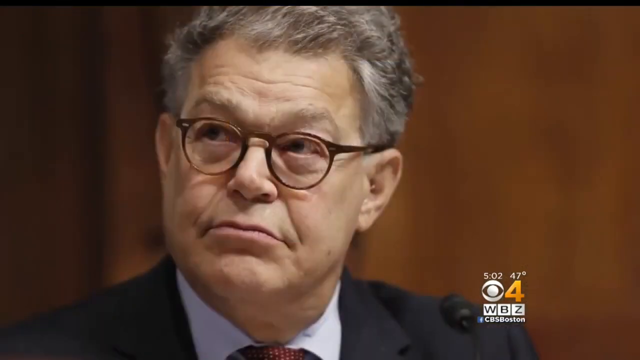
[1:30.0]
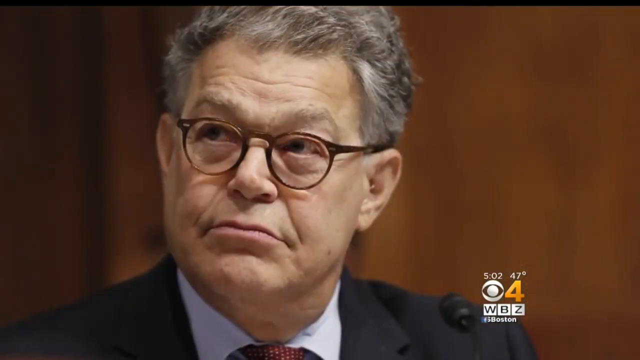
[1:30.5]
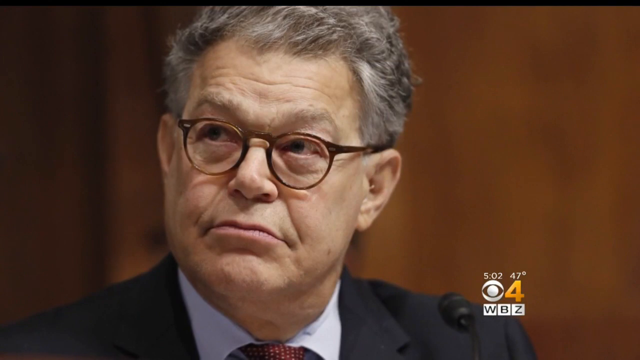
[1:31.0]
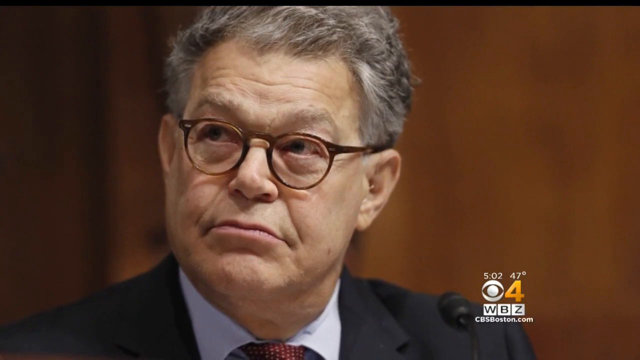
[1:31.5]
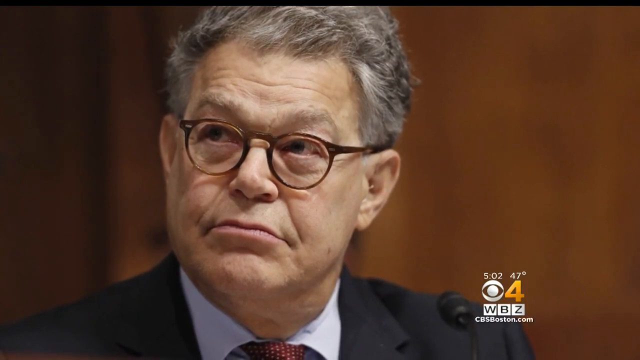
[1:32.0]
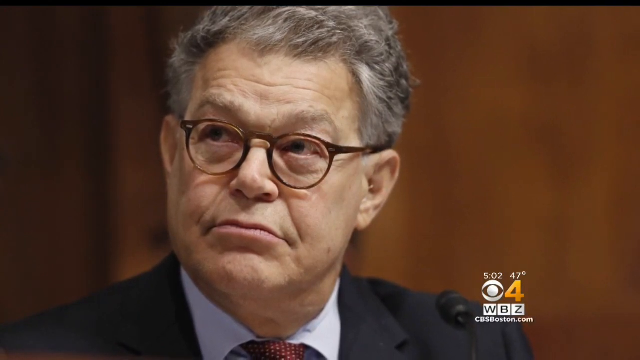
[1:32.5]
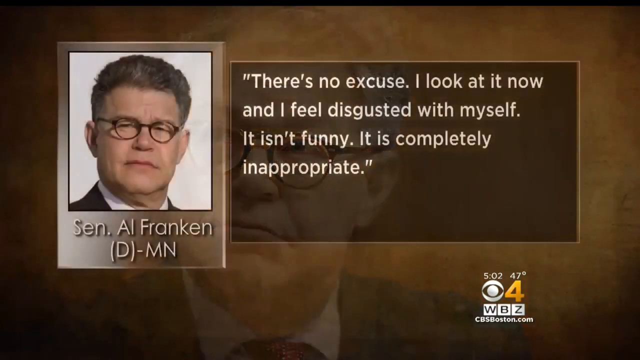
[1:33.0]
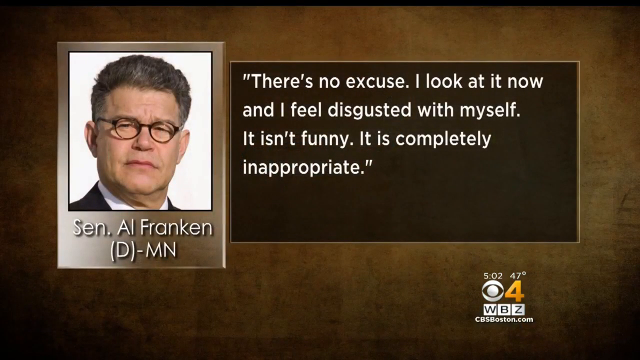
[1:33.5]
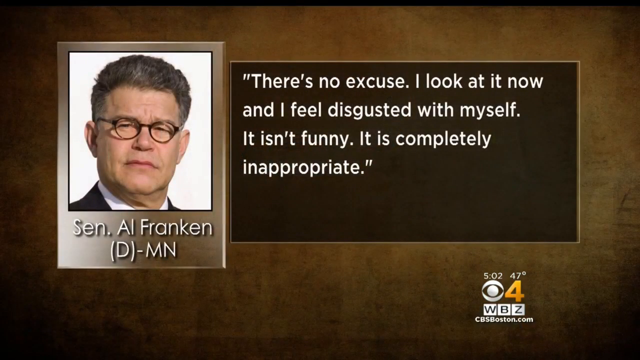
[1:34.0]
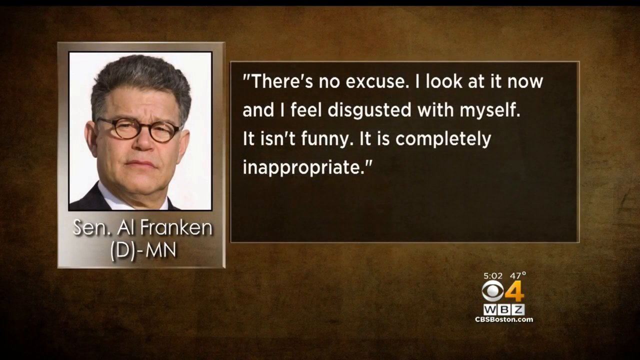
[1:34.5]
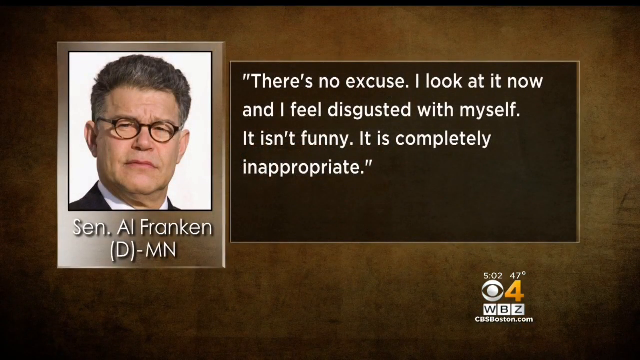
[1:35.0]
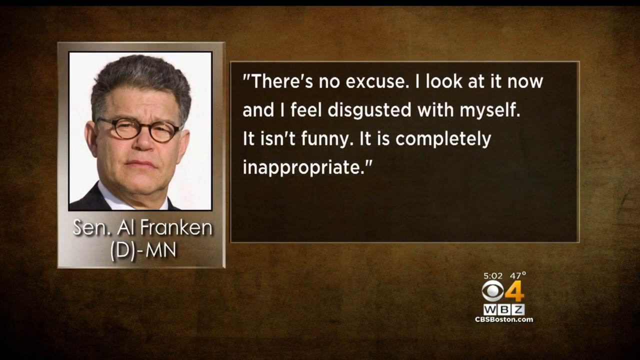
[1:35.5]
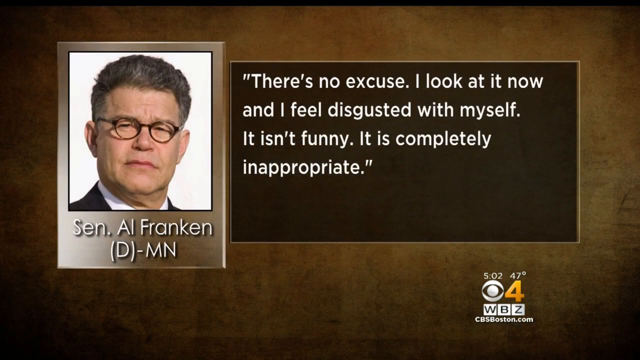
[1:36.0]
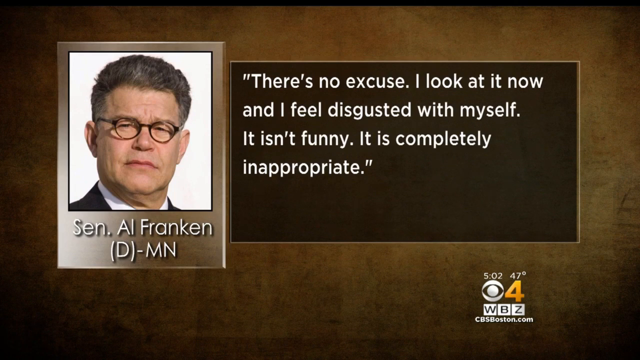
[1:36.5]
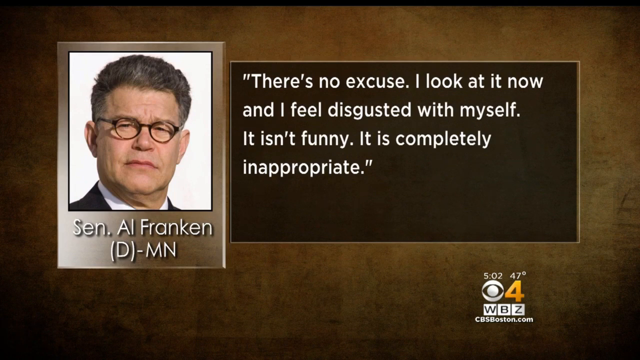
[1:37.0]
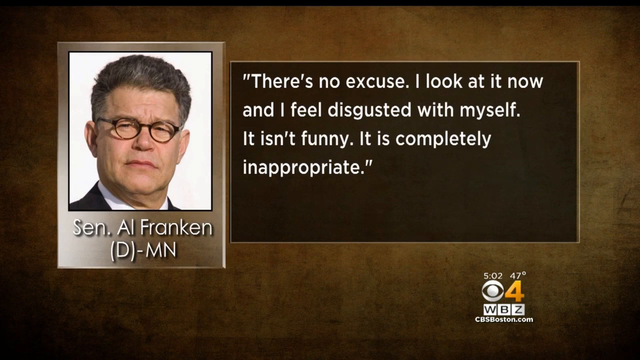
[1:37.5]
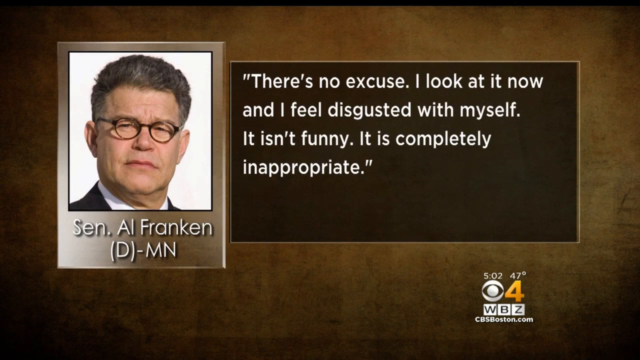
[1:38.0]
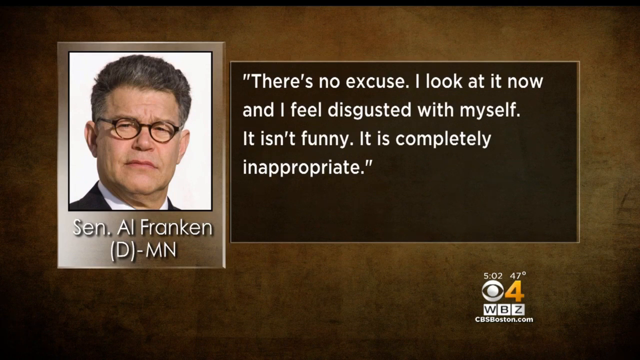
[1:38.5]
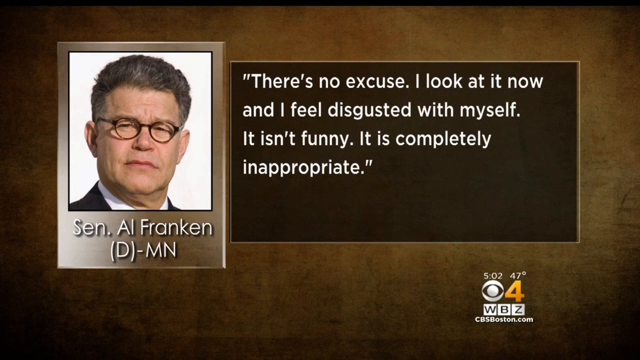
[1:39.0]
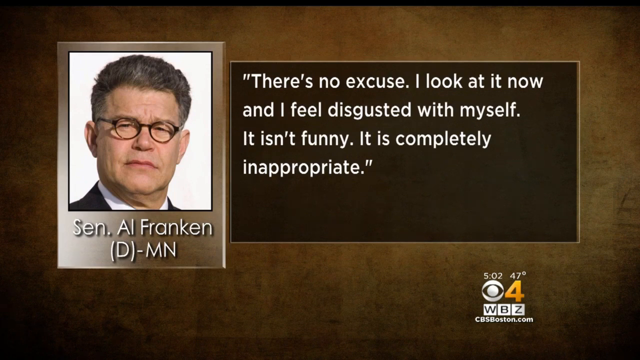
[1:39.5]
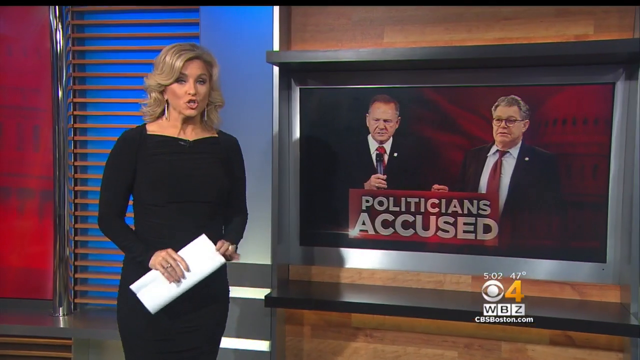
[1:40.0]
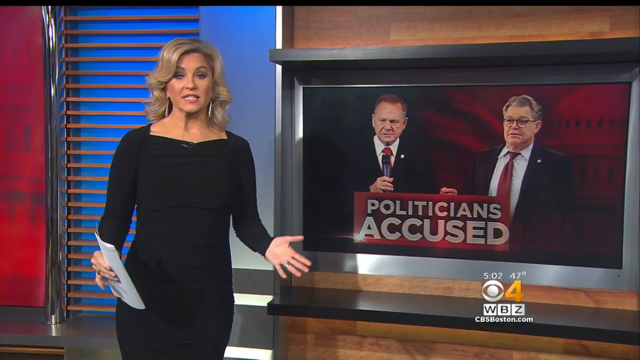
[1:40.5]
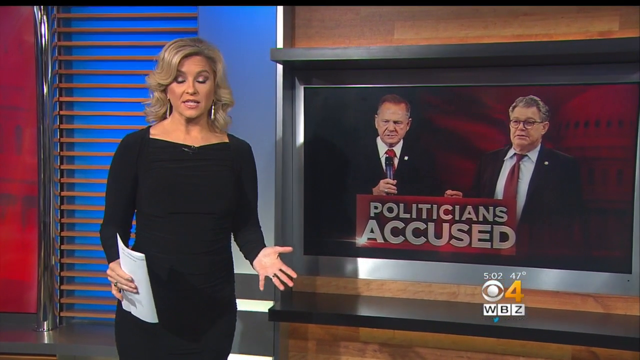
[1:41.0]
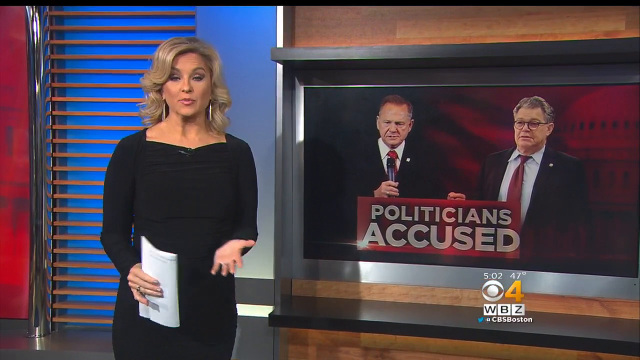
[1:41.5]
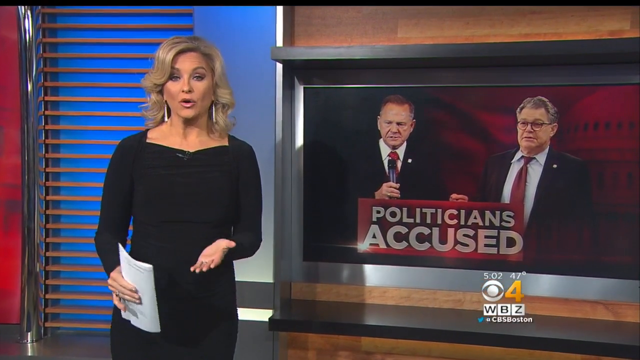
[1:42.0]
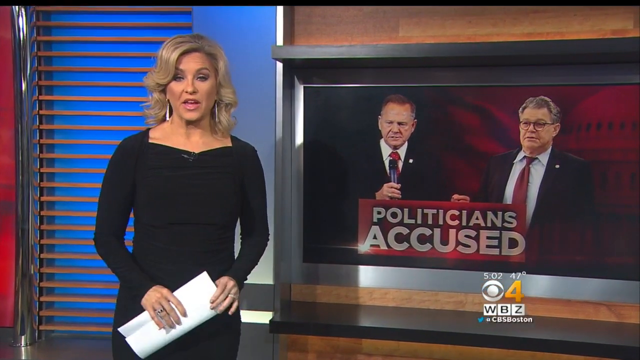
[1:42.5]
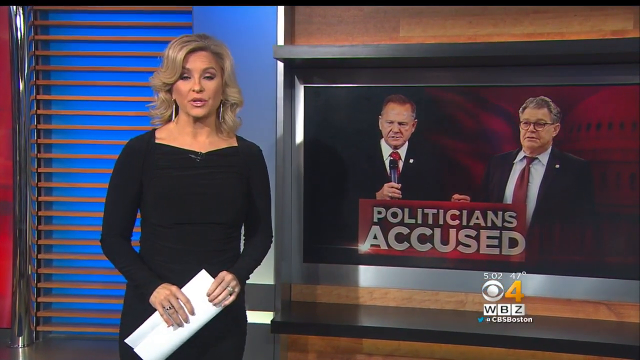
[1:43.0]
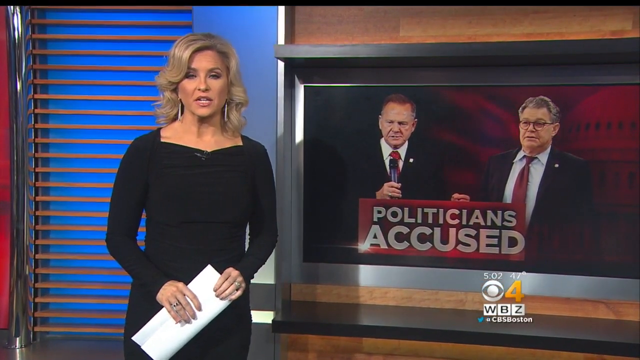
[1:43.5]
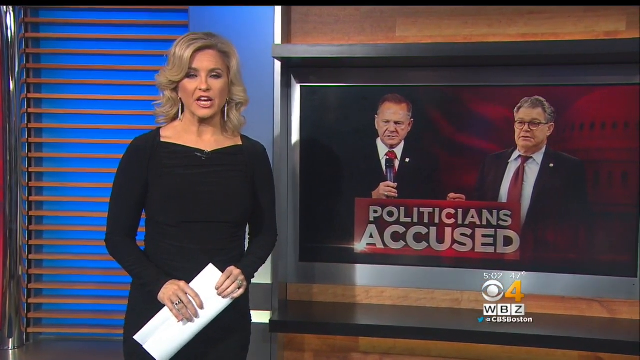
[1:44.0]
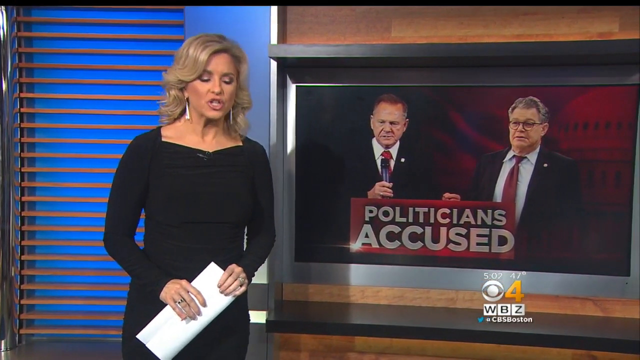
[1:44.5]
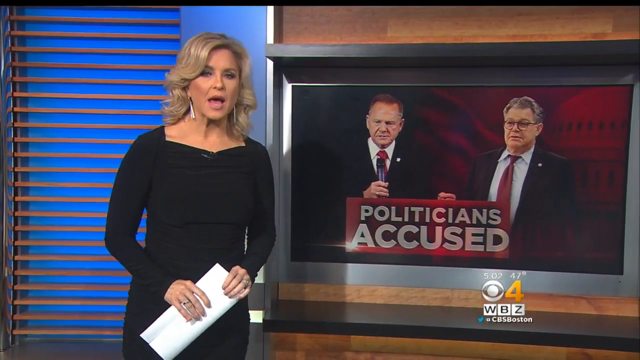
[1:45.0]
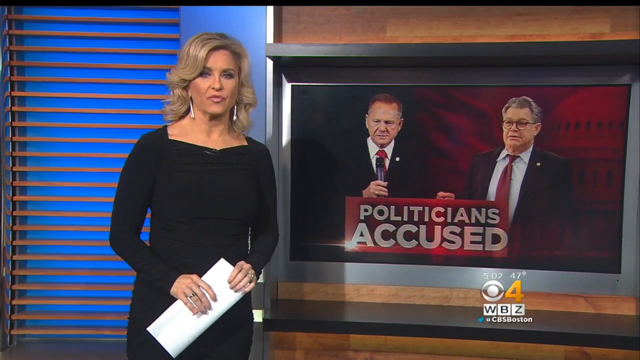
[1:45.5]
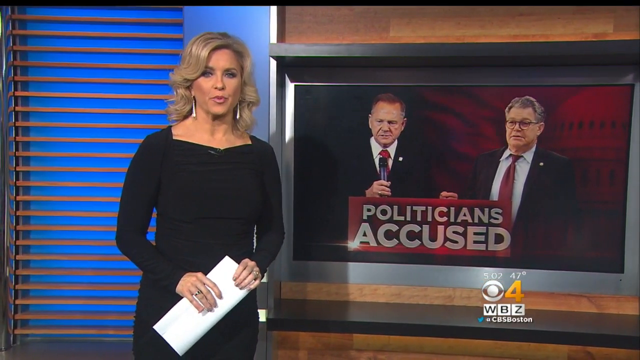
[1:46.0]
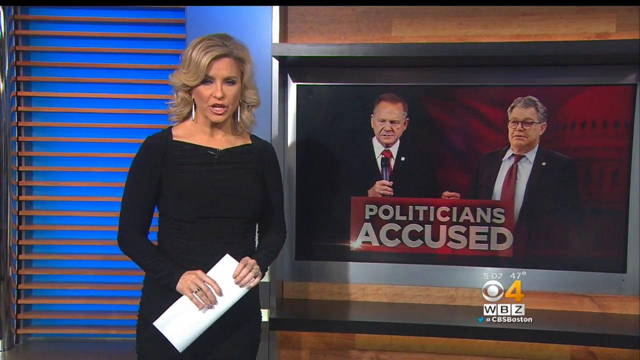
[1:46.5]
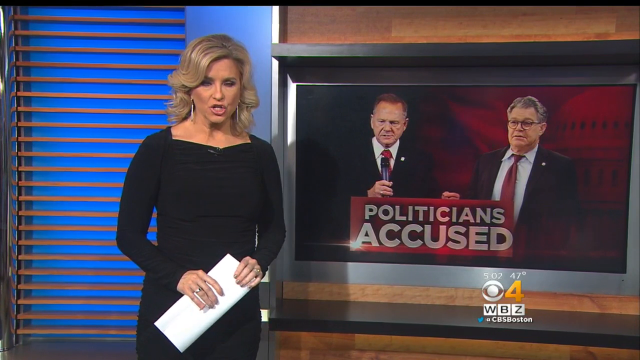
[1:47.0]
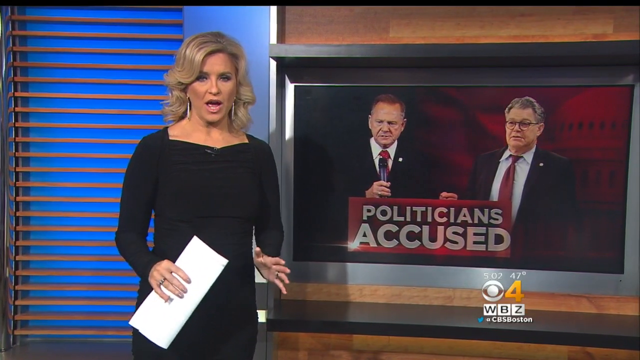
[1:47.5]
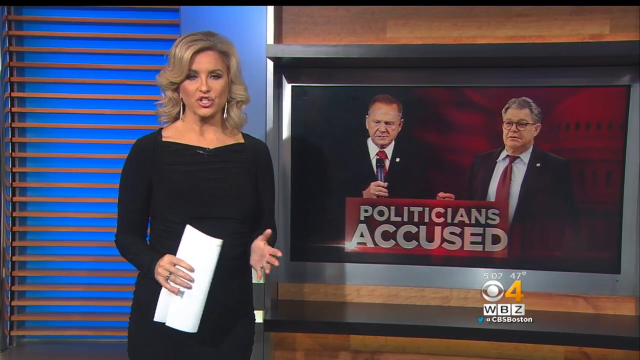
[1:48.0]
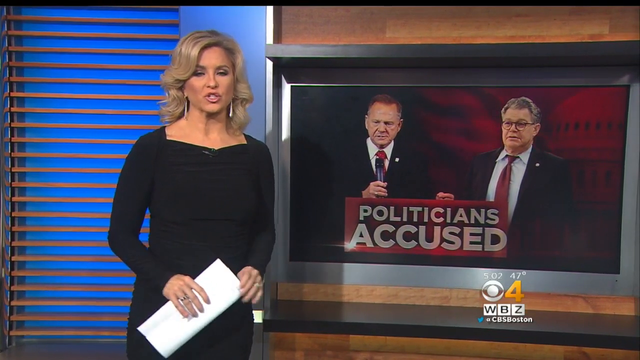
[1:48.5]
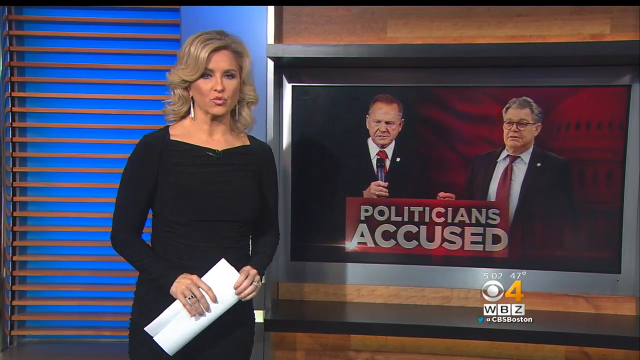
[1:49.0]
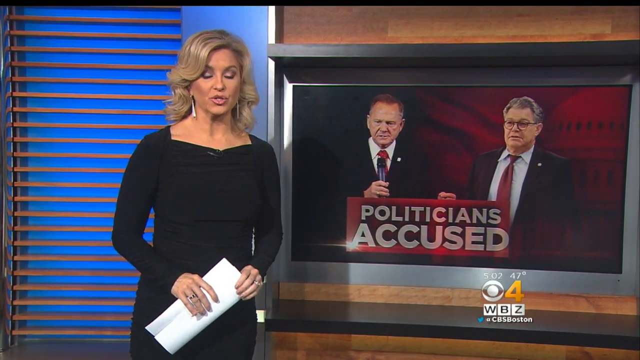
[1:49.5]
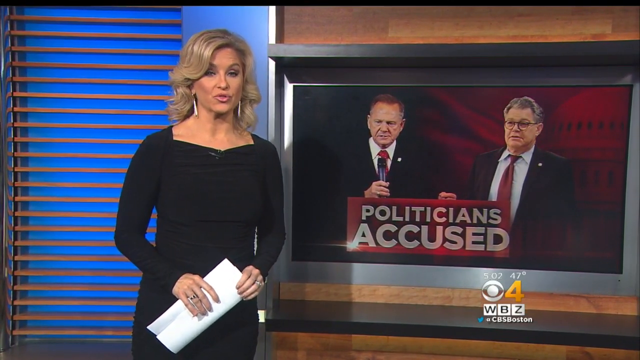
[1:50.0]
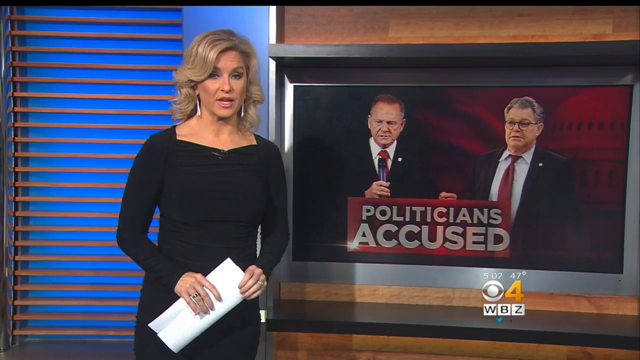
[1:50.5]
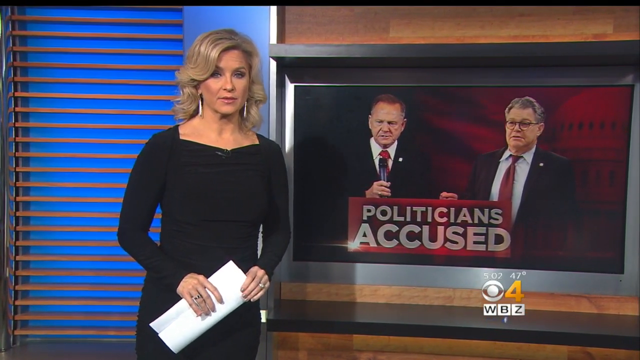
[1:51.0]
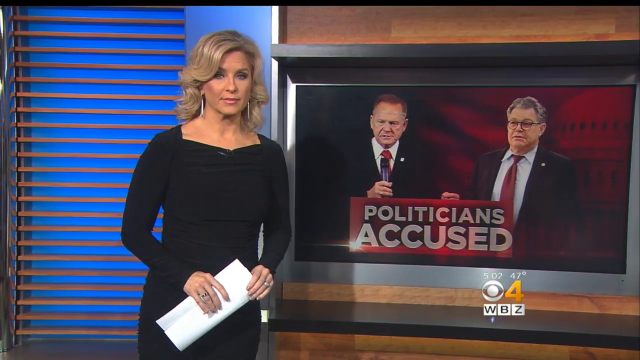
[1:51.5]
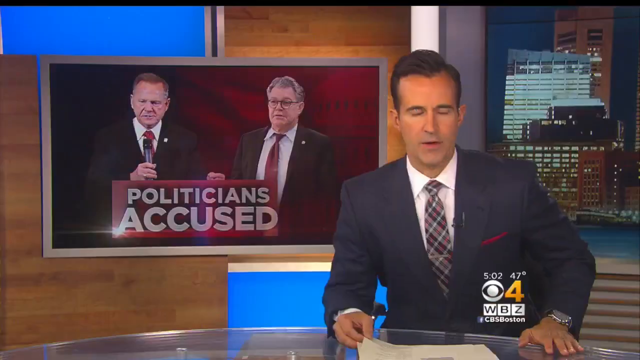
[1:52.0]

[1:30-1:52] The on-screen logo shows Channel 4 CBS Boston, with the time 5.02 and the temperature 47 degrees. A picture of Al Franken shows him wearing glasses and a suit. Another picture of him is on the left, and on the right is a statement from him reading: "There's no excuse. I look at it now, and I feel disgusted with myself. It isn't funny. It is completely inappropriate." The video cuts to the TV studio, where the younger white blonde reporter in a black dress speaks while holding some papers in her right hand; her mouth moves, her eyes blink, and her earrings swing from side to side. Behind her is a big TV reading "politicians accused" with a picture of Al Franken and Roy Moore beside him. She keeps speaking, and the video cuts to a middle-aged male news anchor in a dark suit, white shirt, and red and white tie, sitting at a clear glass table.